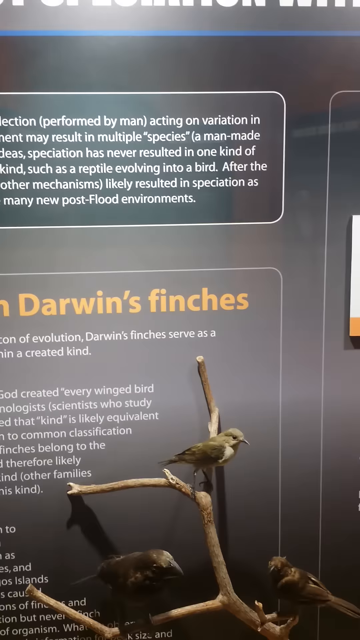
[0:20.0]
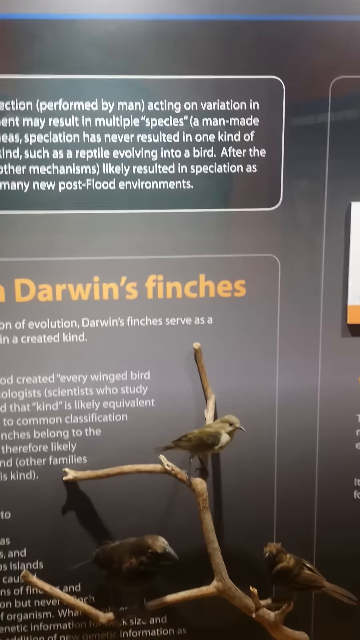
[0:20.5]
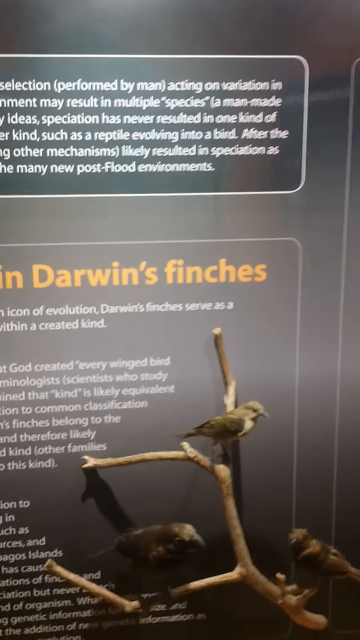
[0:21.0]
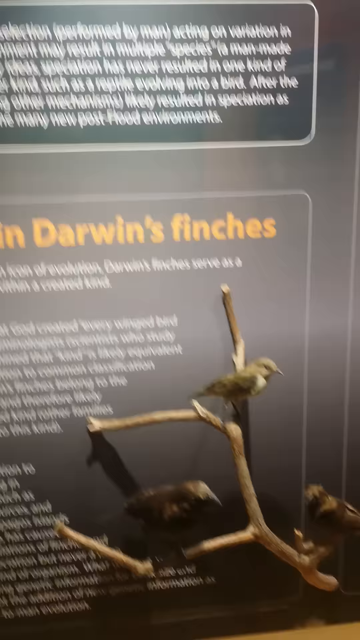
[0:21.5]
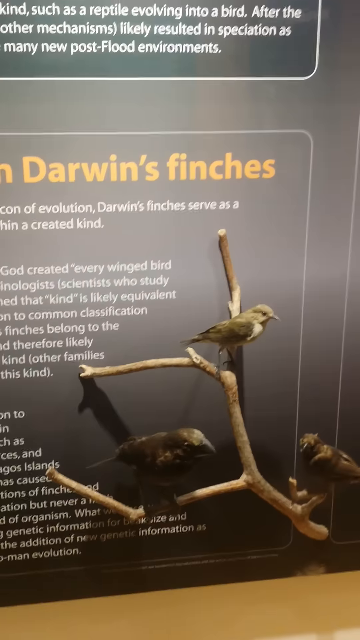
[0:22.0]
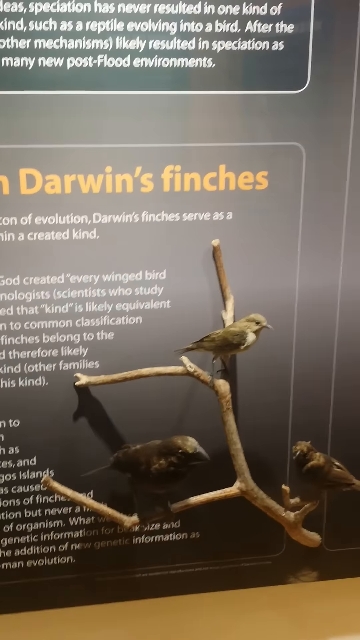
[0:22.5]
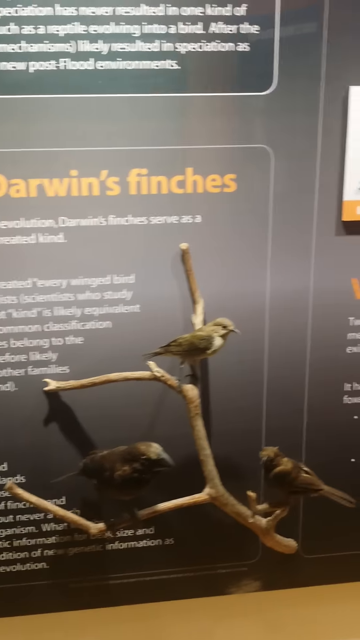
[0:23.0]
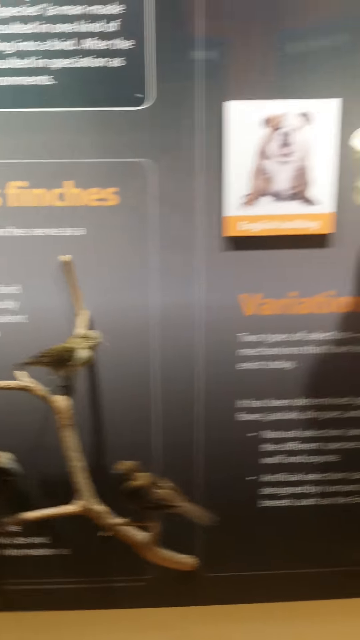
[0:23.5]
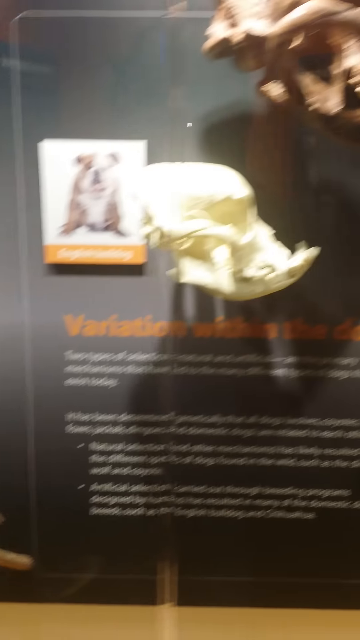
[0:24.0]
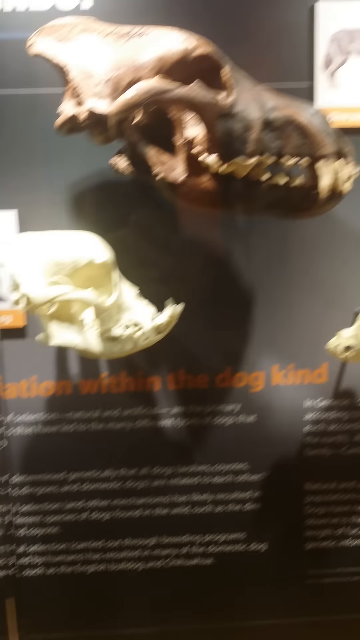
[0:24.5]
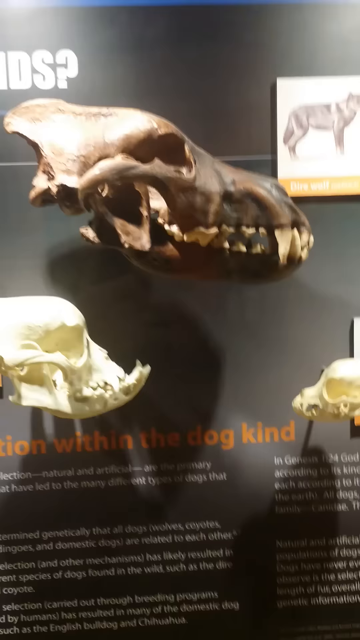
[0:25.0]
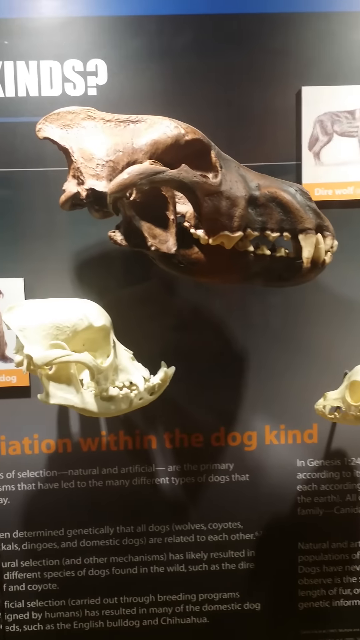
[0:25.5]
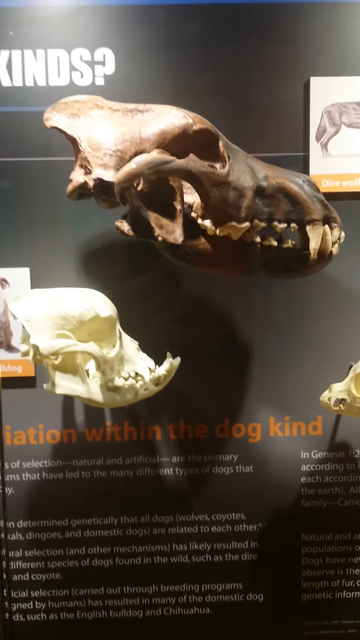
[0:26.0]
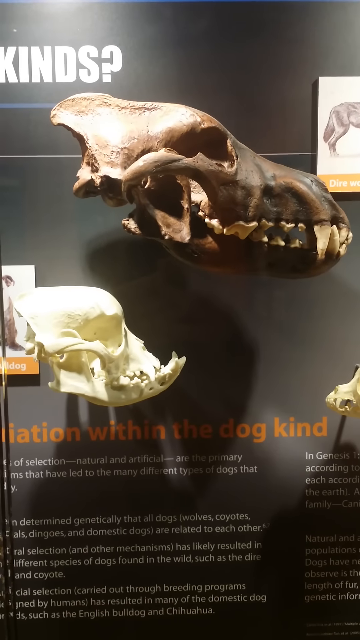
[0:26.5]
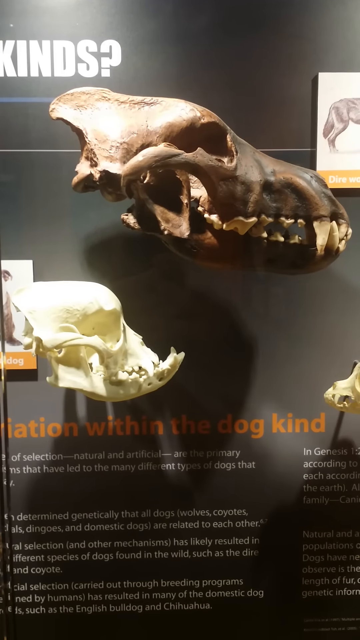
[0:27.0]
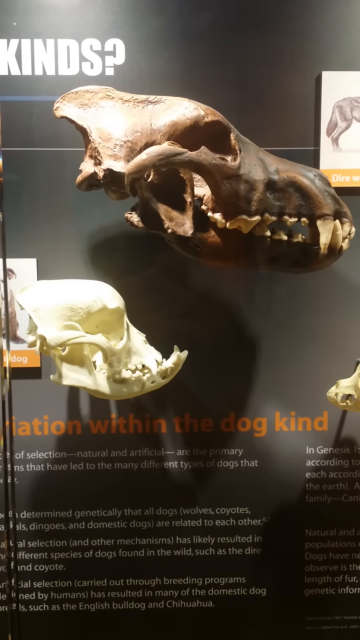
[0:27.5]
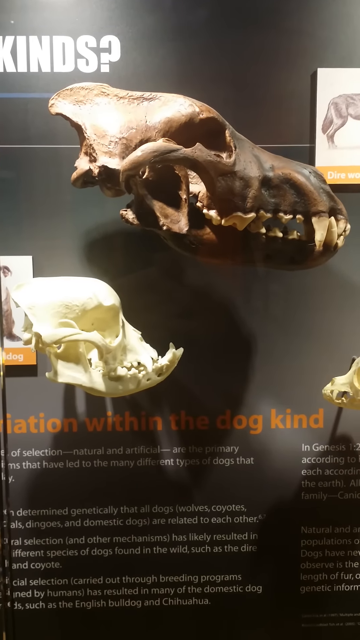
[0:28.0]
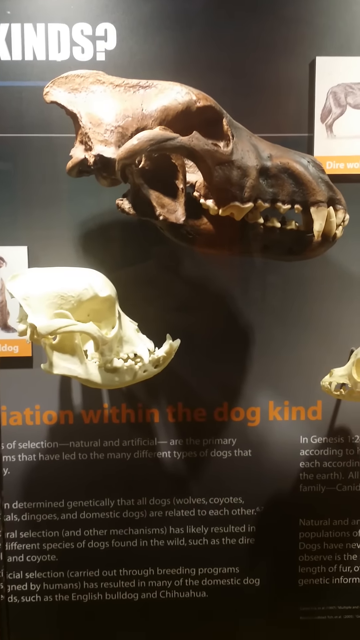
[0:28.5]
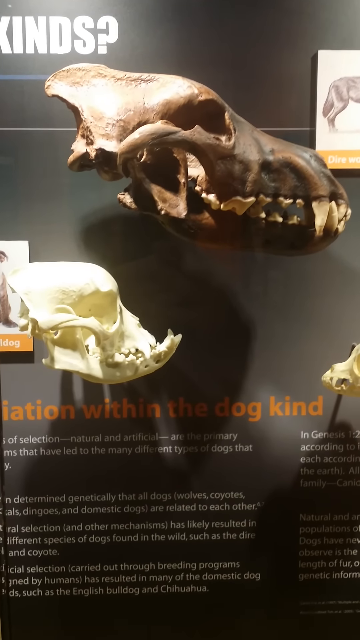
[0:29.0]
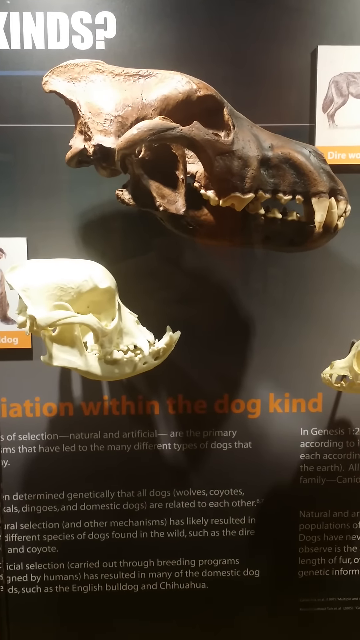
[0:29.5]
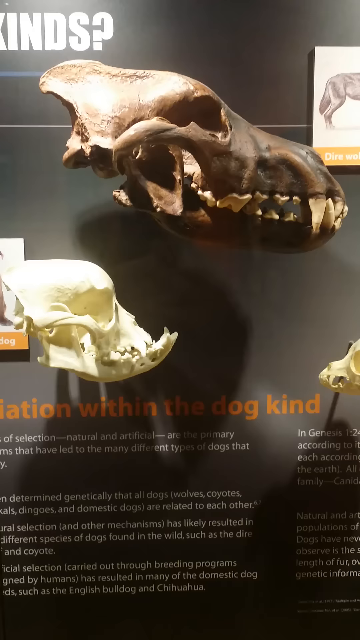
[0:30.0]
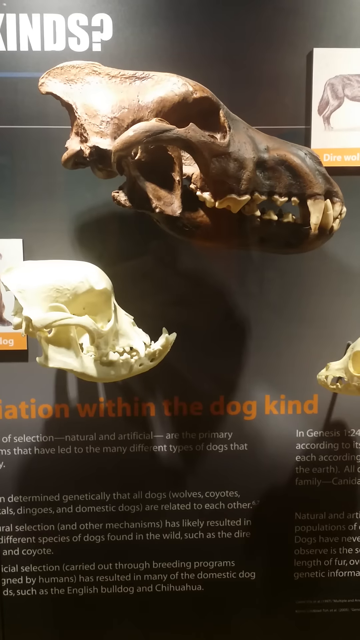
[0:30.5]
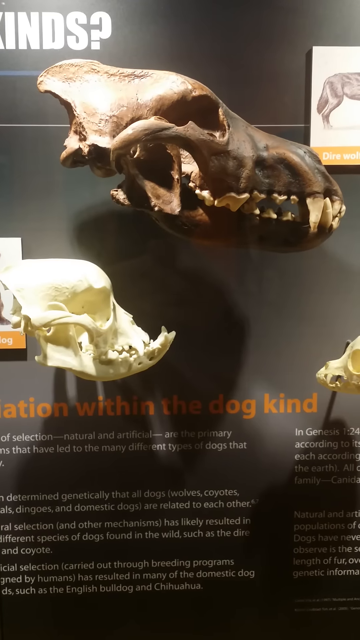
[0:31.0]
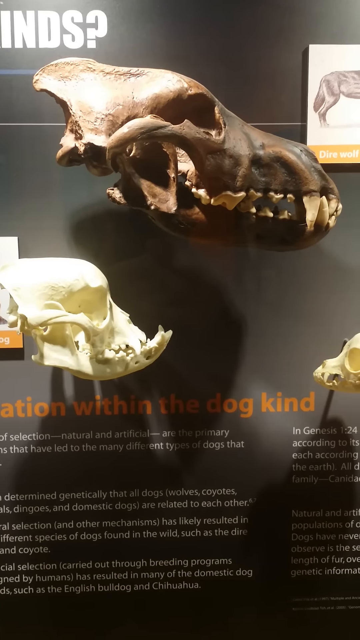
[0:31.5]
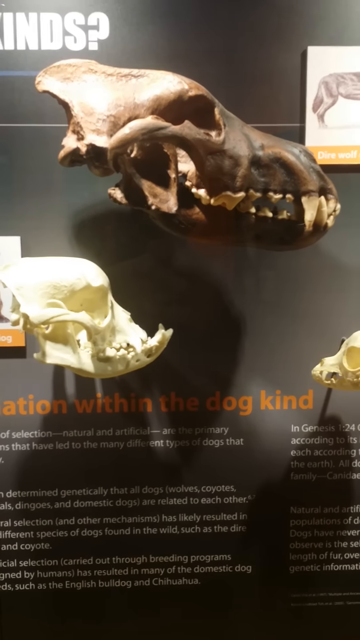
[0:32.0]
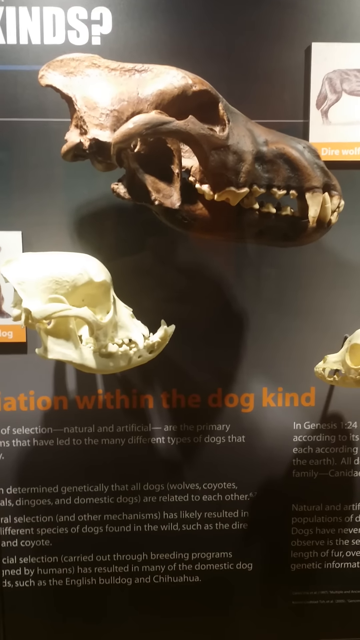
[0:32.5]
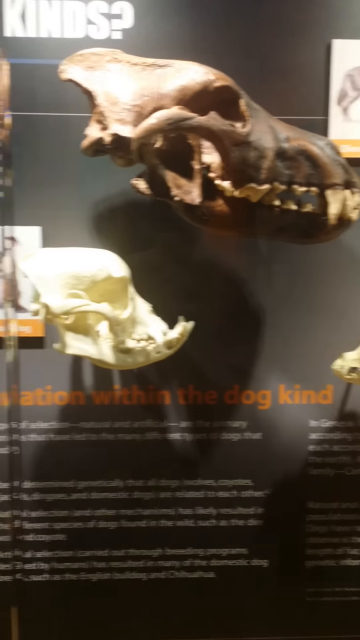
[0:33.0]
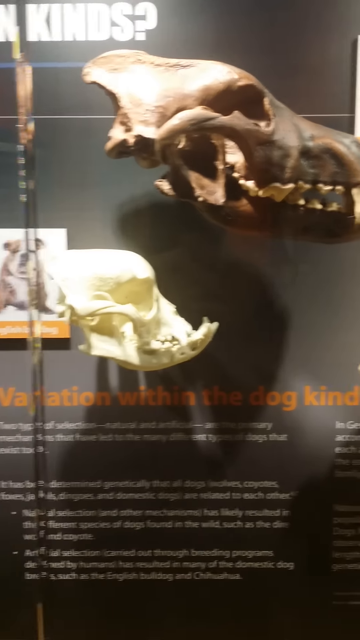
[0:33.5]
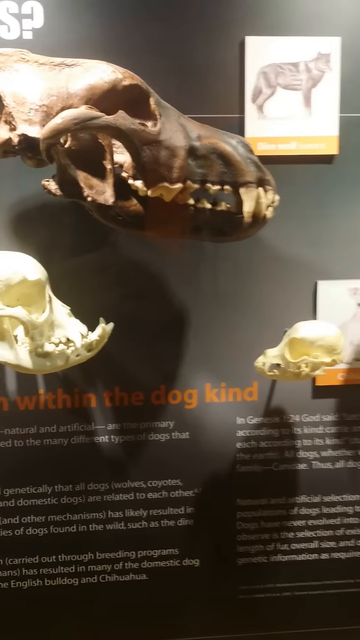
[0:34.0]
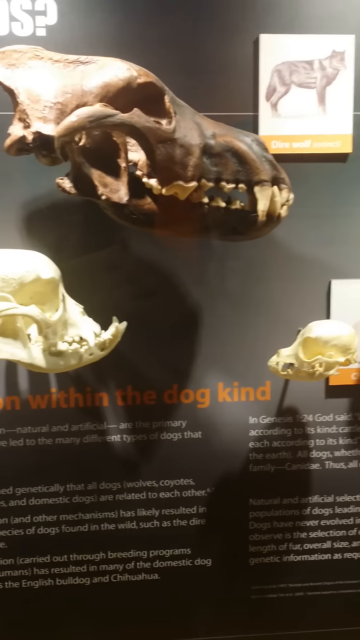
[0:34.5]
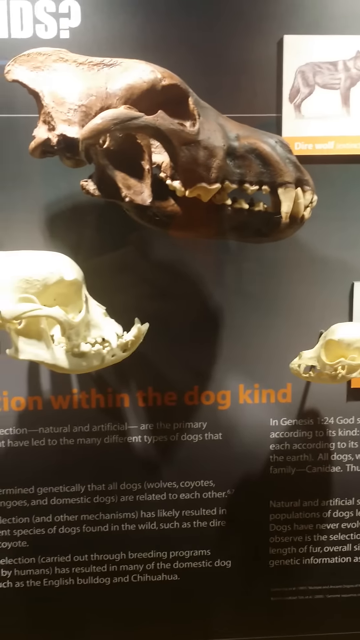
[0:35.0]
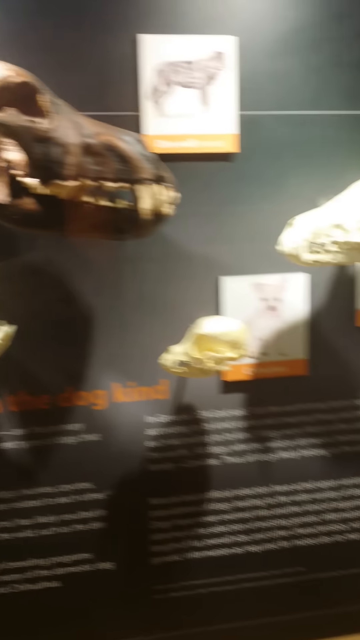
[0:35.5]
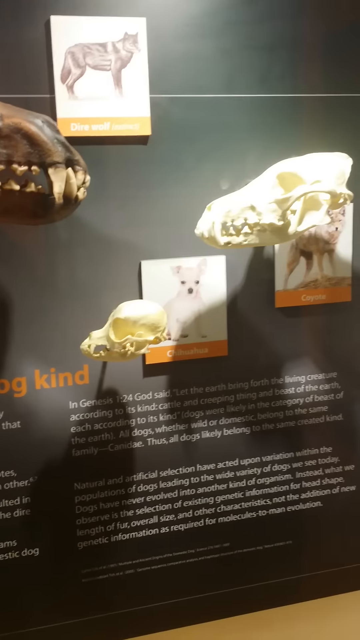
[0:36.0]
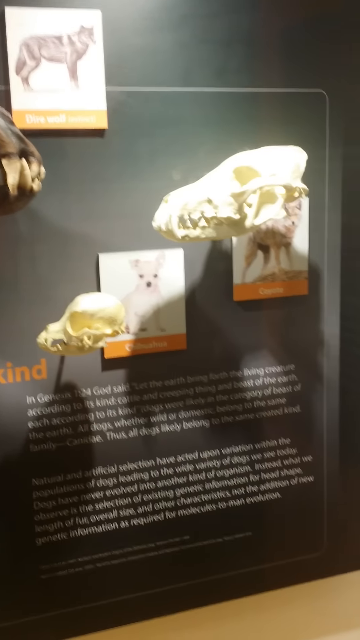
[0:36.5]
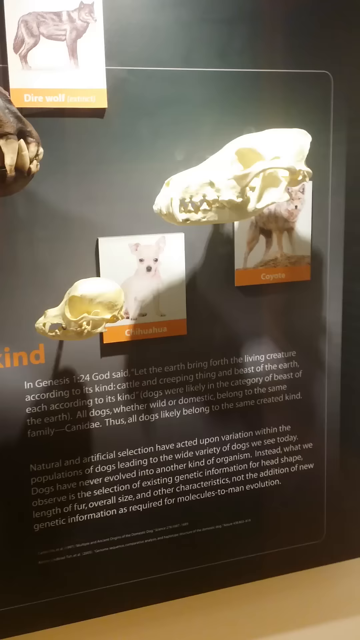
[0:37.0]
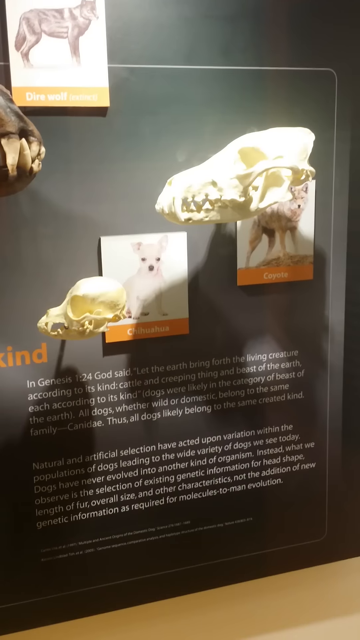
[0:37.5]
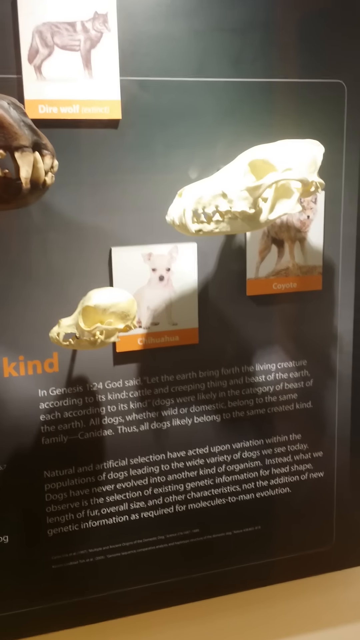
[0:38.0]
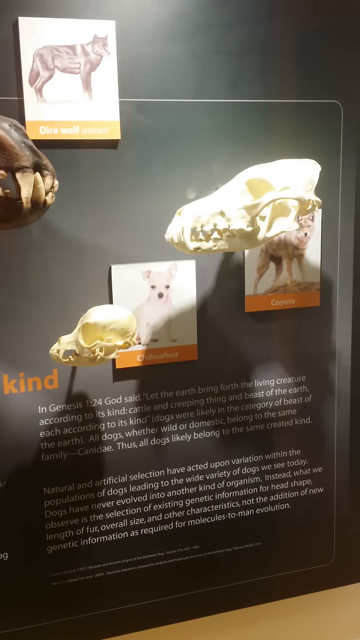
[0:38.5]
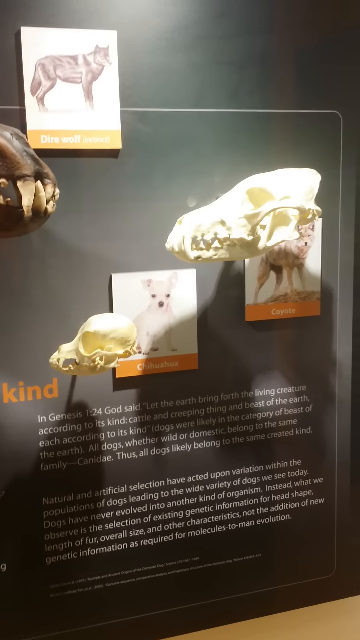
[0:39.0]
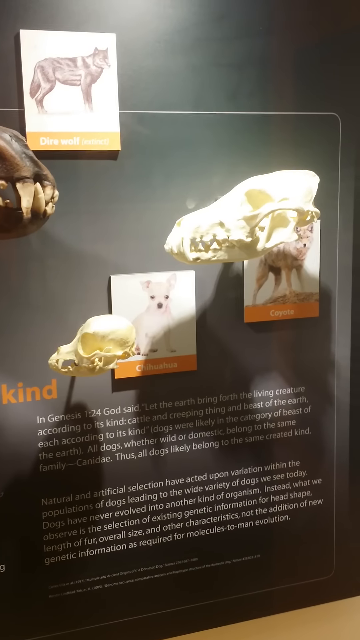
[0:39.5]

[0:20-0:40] The Darwin's finches are visible, looking slightly different from each other. The camera moves to the other side of the wall, which shows variation within the dog kind: three different dog skulls, with lots of text explaining how this variation came about through artificial selection by humans rather than natural selection. The skulls of different types of dogs are shown, including large skulls of large dogs, the skull of a bulldog, and a chihuahua's very tiny skull, along with explanations for each. The view remains on the same museum exhibition about speciation, natural selection and artificial selection.